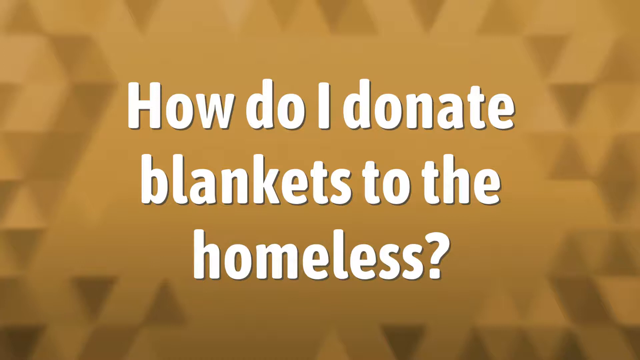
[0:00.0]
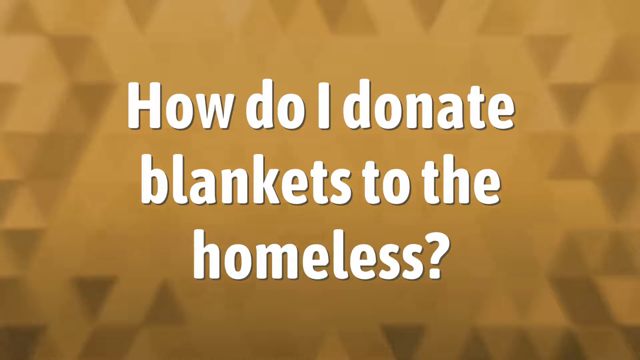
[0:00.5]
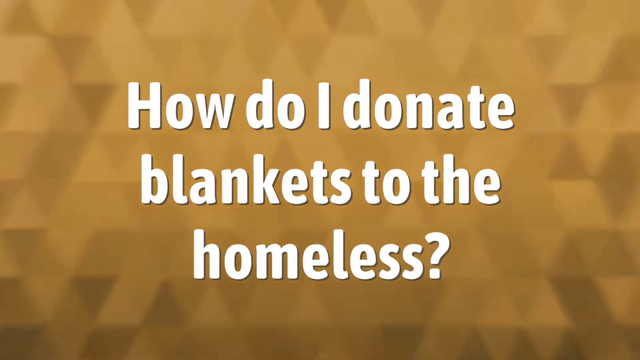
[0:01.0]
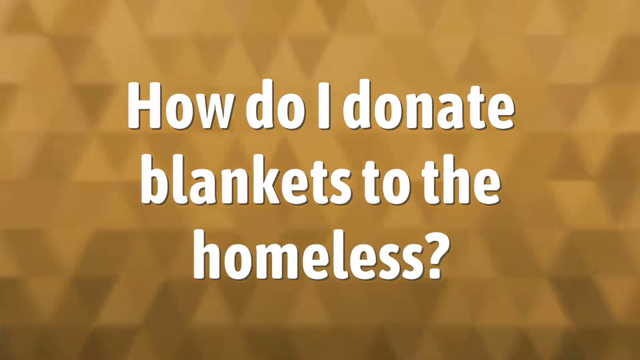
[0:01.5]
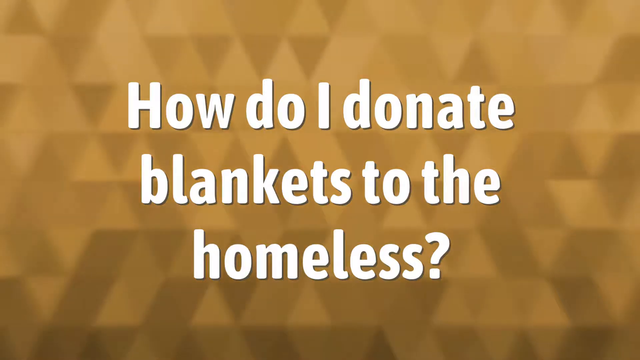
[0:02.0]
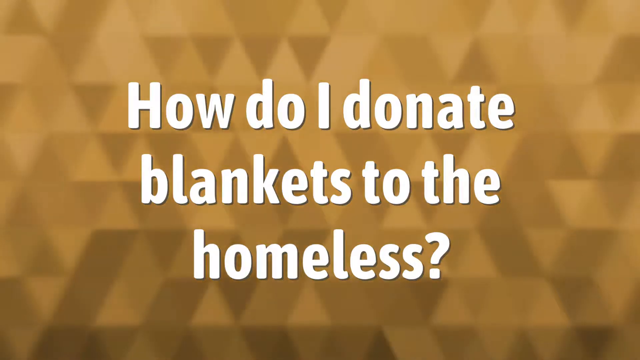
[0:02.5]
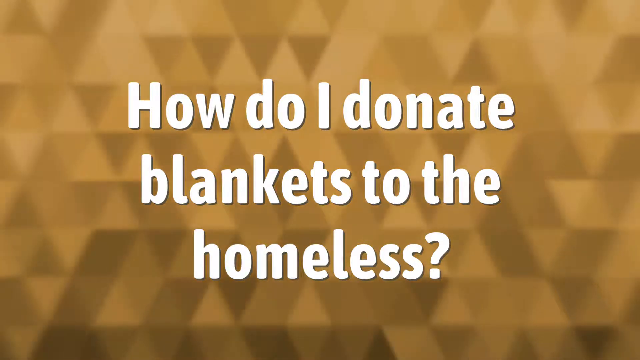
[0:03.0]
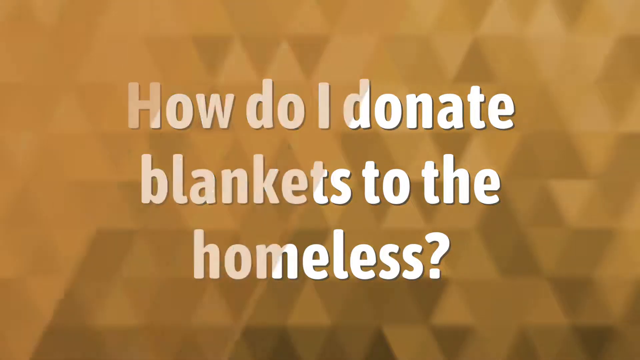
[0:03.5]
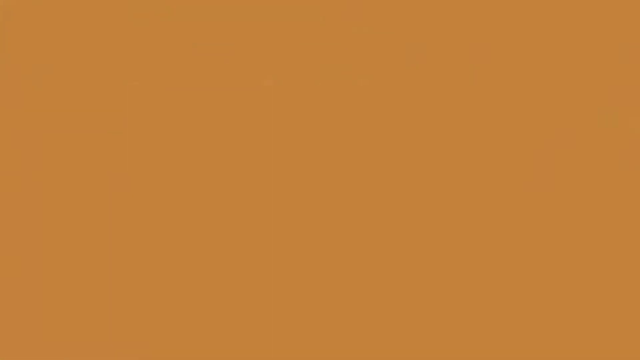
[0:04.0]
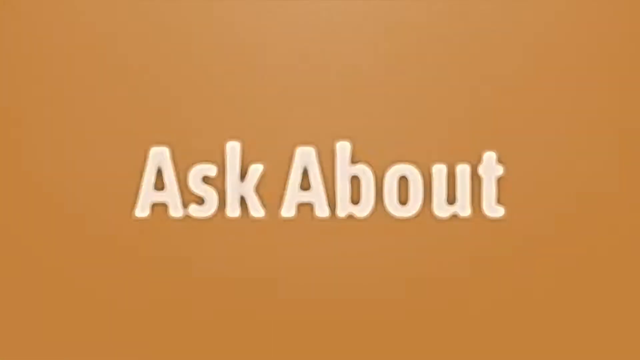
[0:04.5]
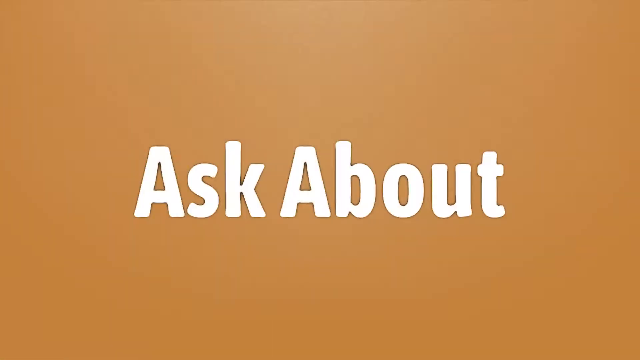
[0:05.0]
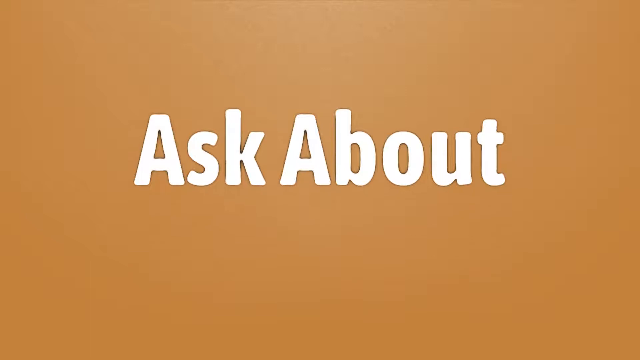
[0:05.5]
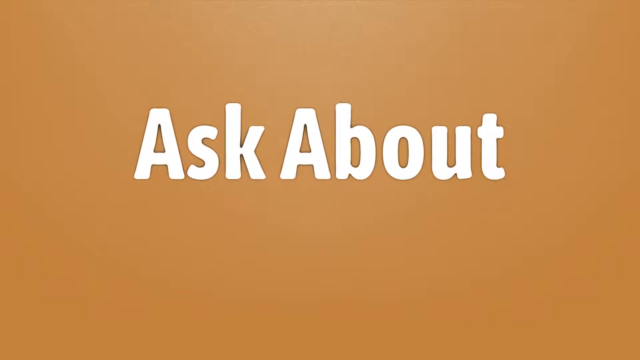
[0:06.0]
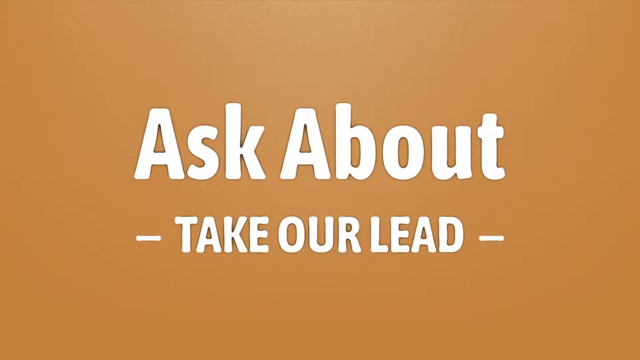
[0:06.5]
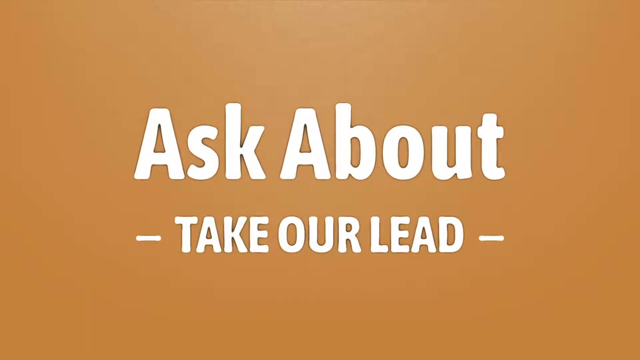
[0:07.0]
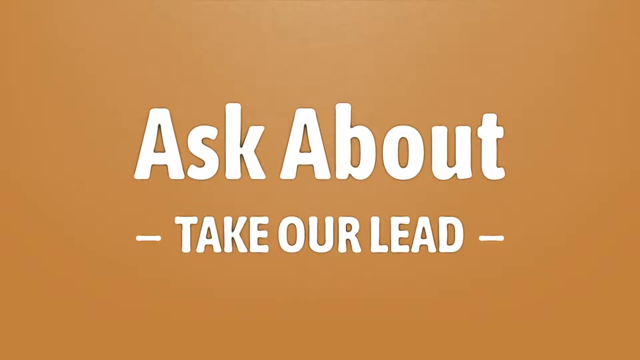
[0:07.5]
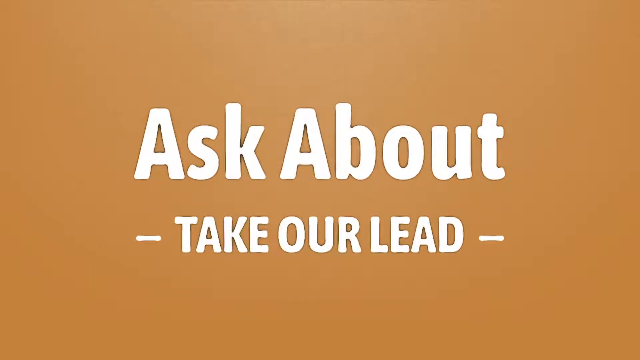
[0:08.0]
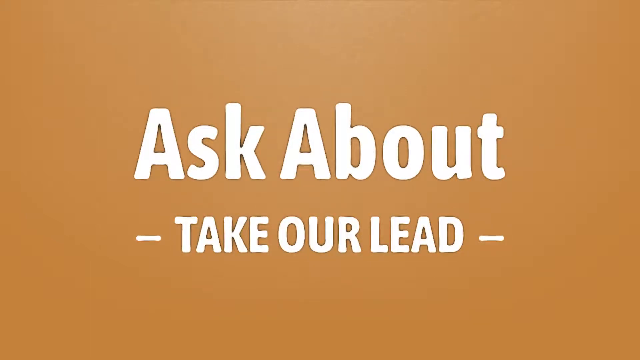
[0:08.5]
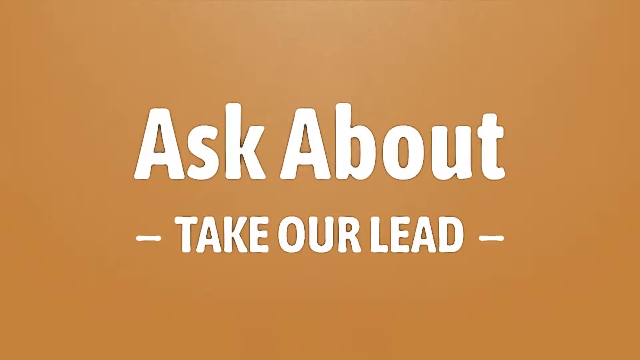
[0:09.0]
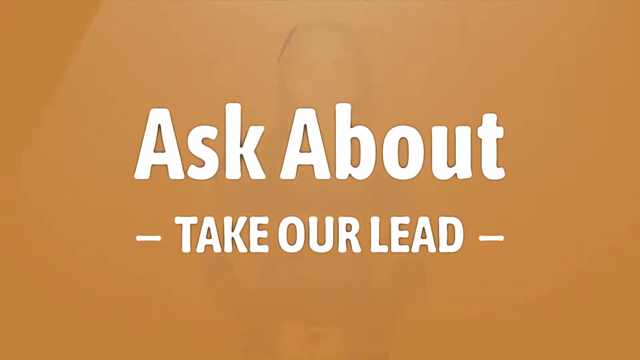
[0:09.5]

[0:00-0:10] White text on a brown background reads "how do I donate blankets to the homeless". It appears to be a woman talking. The next scene shows a woman who seems to be about to say something.